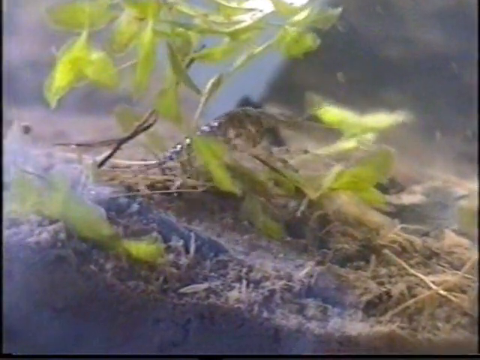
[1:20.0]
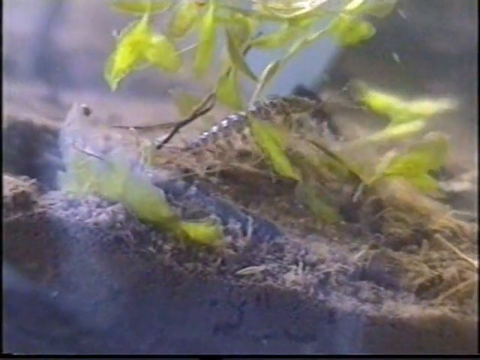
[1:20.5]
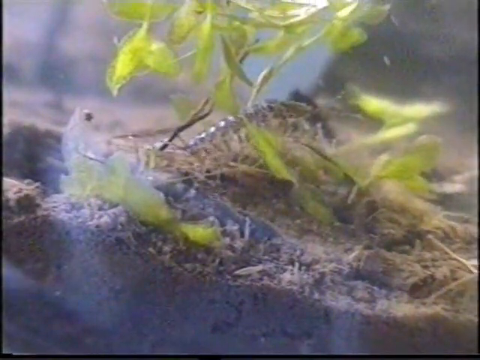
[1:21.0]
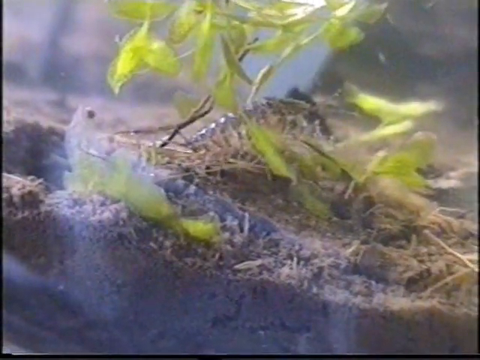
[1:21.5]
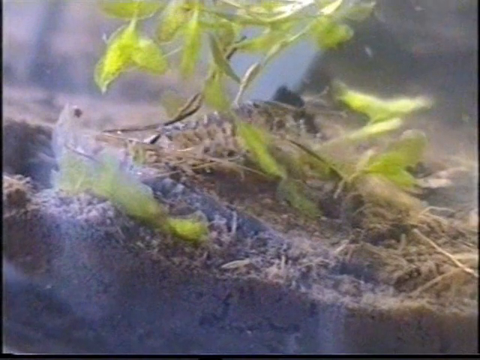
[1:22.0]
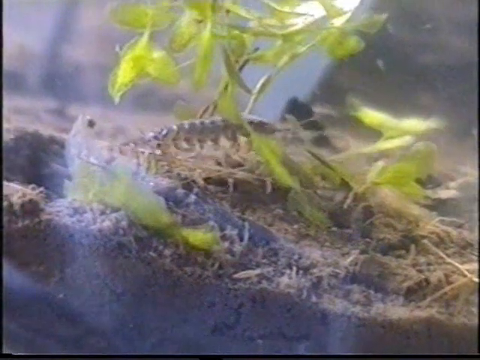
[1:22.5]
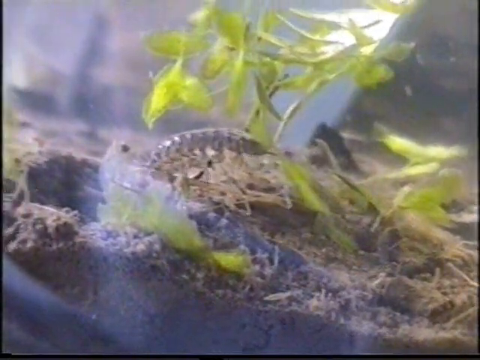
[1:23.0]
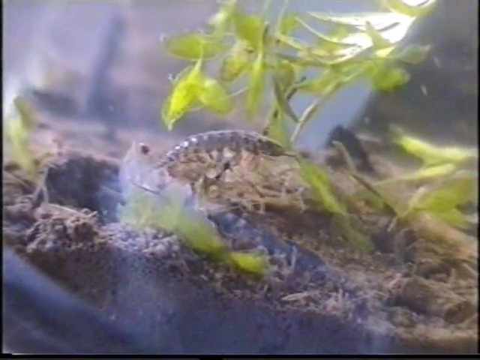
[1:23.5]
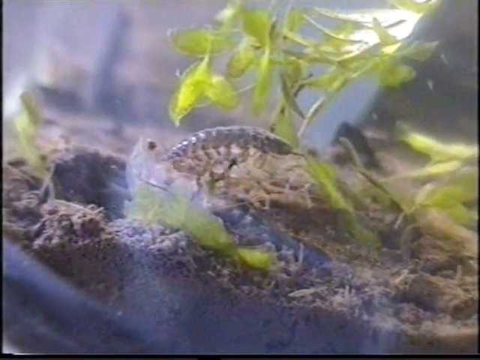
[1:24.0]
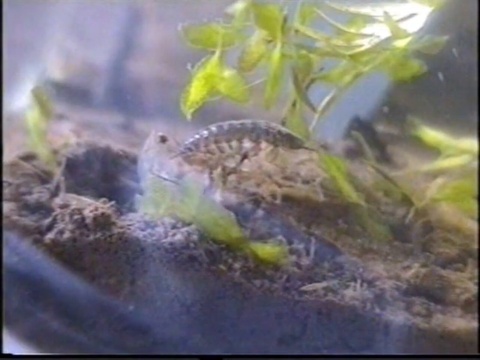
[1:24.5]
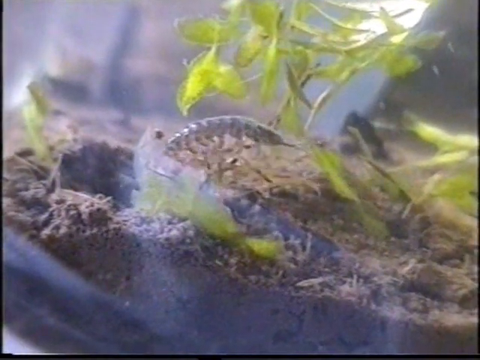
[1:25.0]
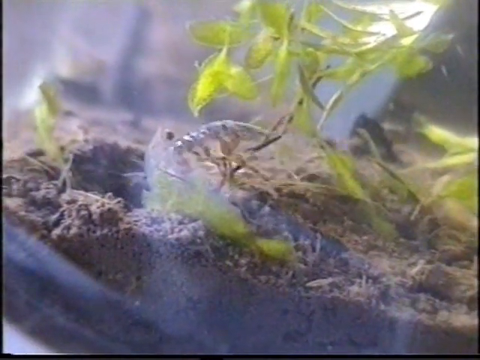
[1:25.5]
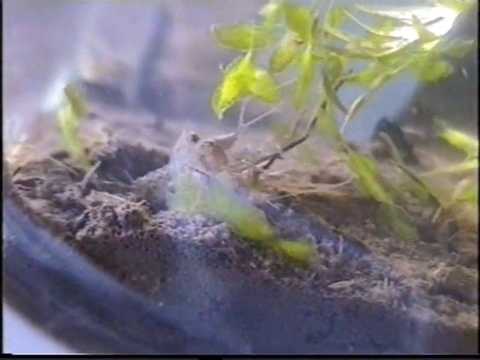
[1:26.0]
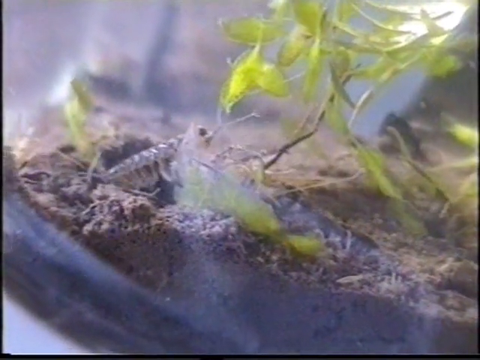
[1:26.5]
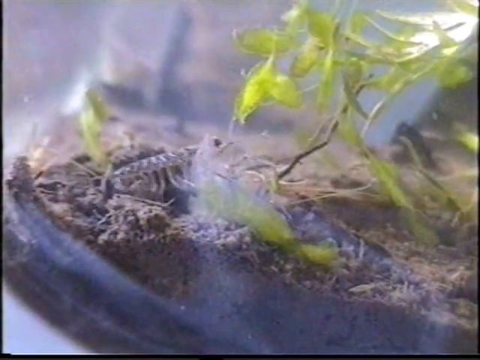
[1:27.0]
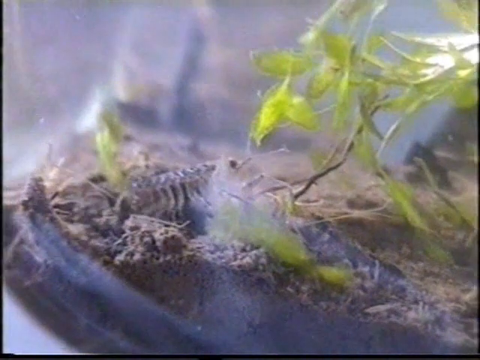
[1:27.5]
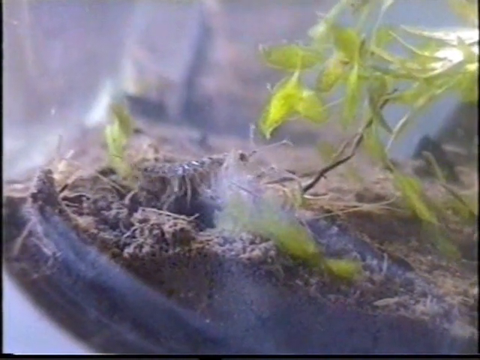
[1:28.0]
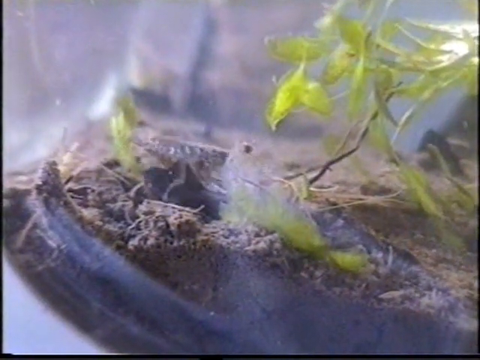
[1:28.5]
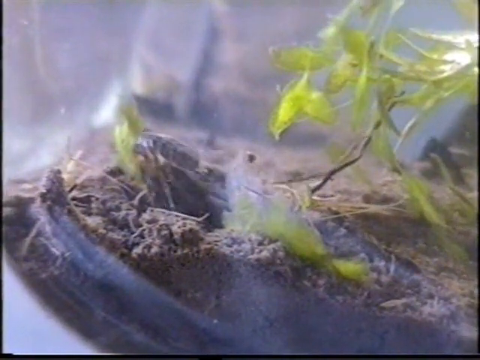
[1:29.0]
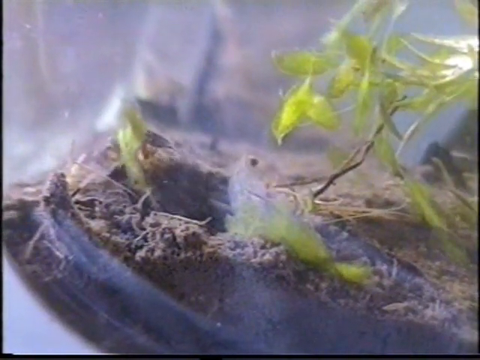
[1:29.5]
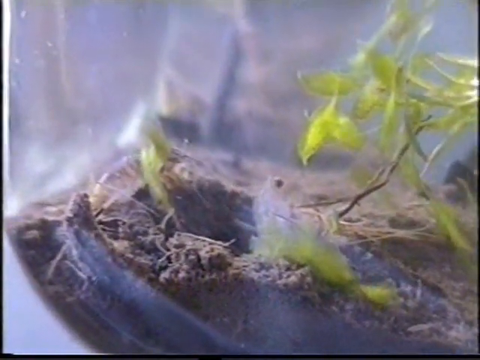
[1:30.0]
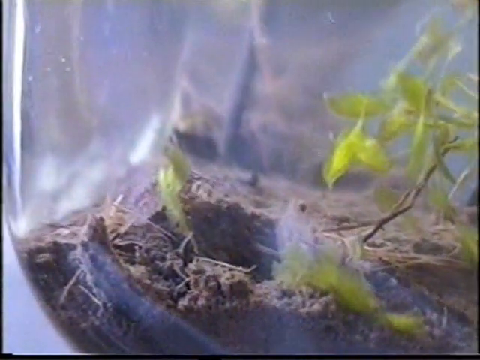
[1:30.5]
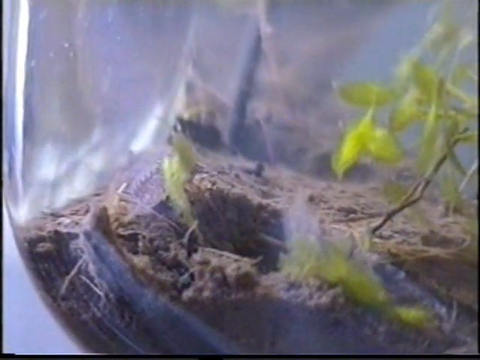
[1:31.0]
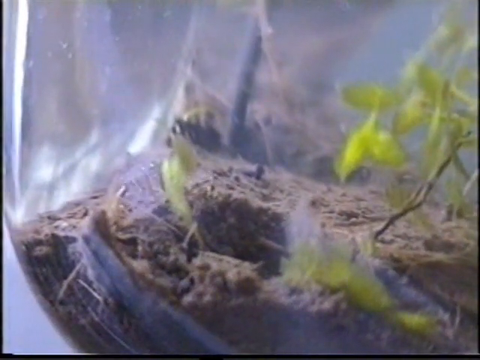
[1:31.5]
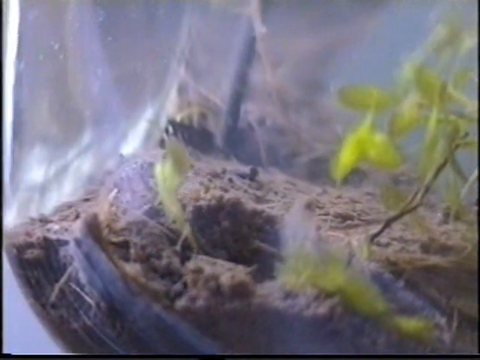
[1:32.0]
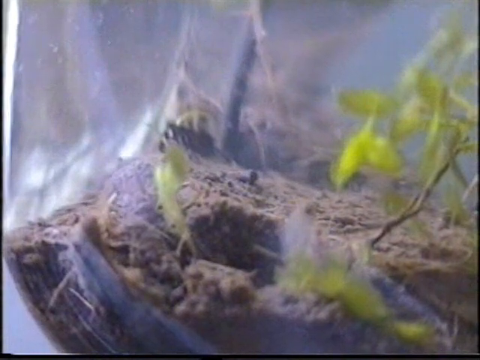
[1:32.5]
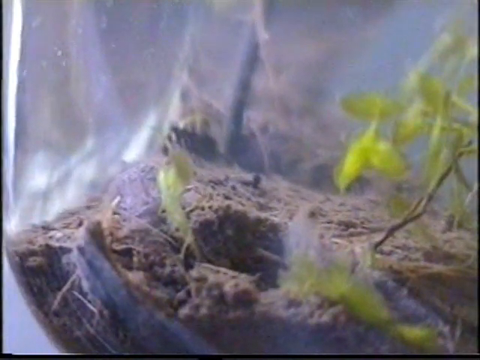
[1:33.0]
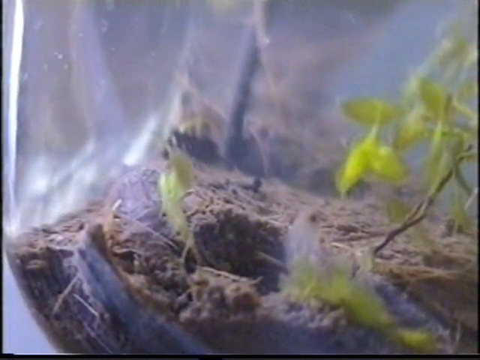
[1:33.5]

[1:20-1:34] The very long pill bug is at the bottom of the container and looks like it has made it to the edge of the bowl, which has a lot more dirt in it. At one point the pill bug is sitting on top of the rock resting; it stops, and something looks like it is hanging on one of its legs. It is unclear whether this is part of the pill bug or something caught on its leg, but it looks like the bug is dragging something as it moves along the bottom of the clear container. It goes over the little twig again, exploring, and goes through the dirt as well, looking like it is searching for something. Little particles float in the water, possibly stirred up from the floor of the container by the bug's movement. Some areas in the aquarium look a little dark.